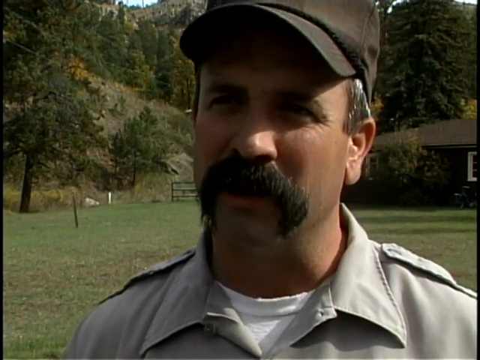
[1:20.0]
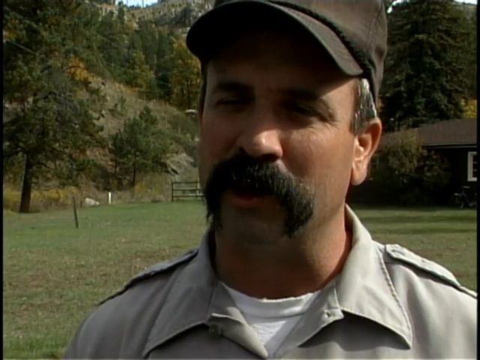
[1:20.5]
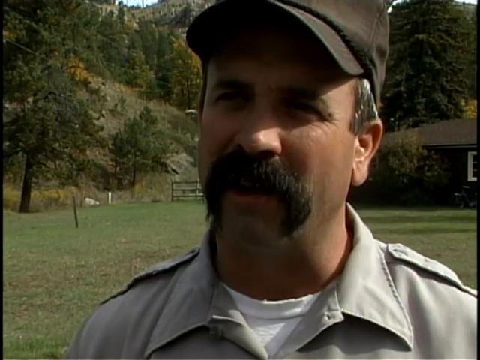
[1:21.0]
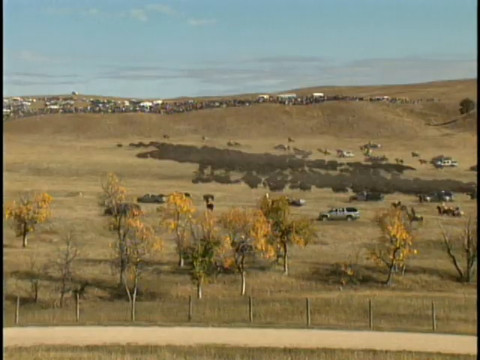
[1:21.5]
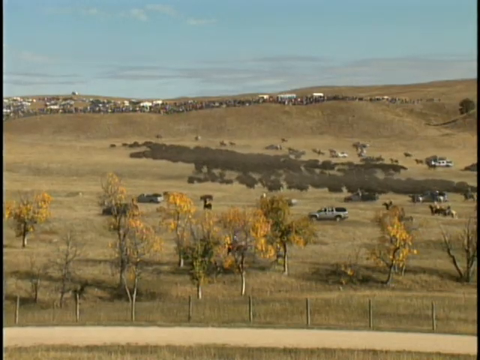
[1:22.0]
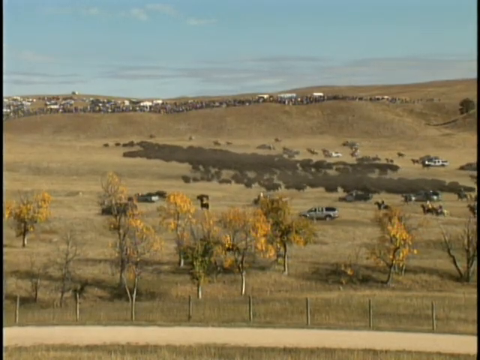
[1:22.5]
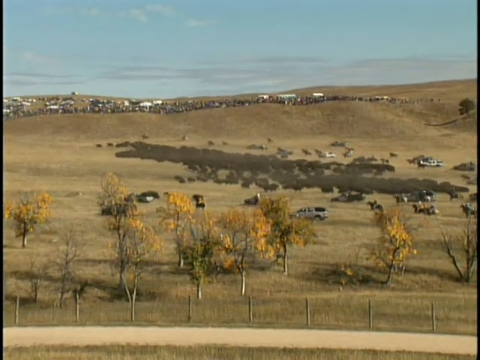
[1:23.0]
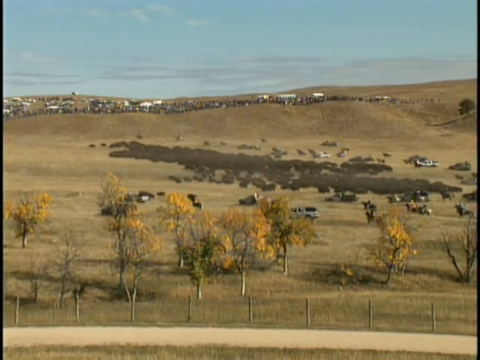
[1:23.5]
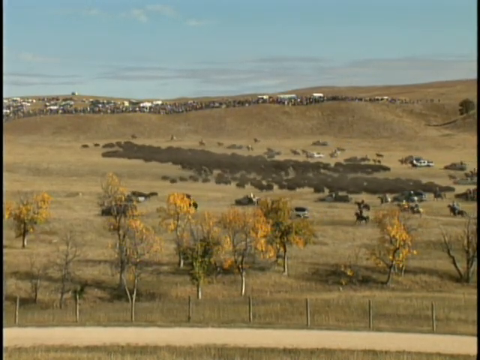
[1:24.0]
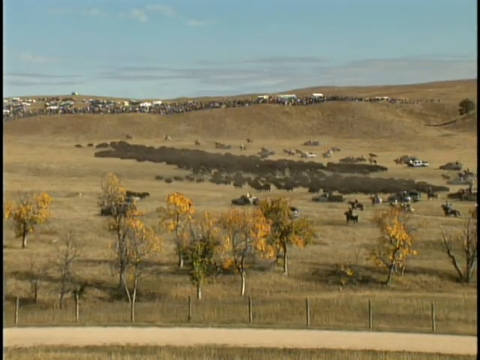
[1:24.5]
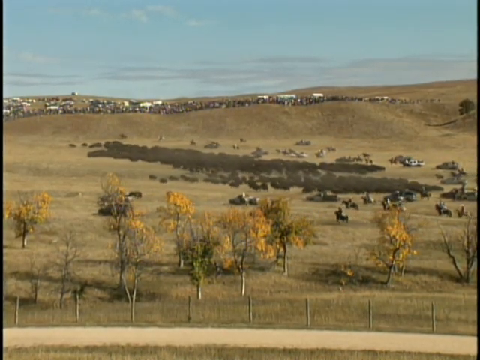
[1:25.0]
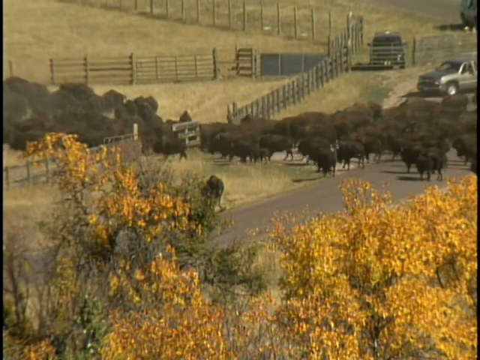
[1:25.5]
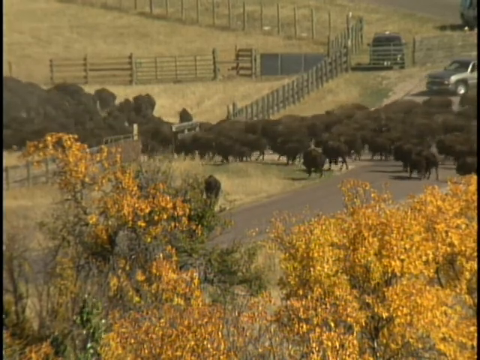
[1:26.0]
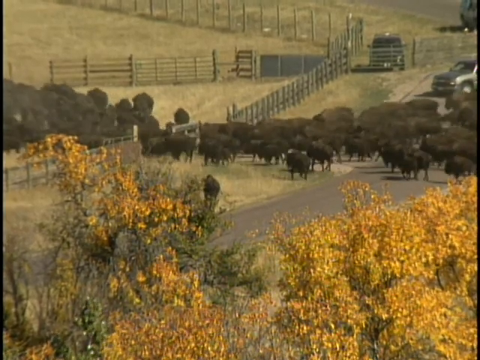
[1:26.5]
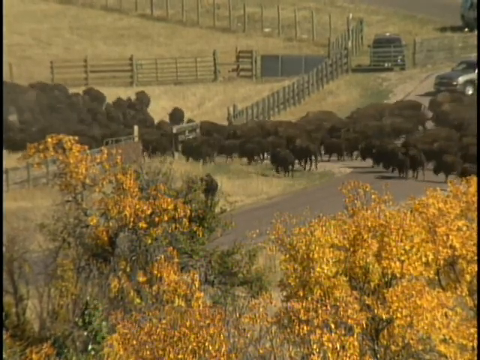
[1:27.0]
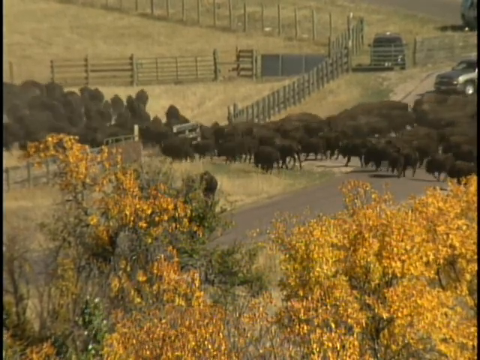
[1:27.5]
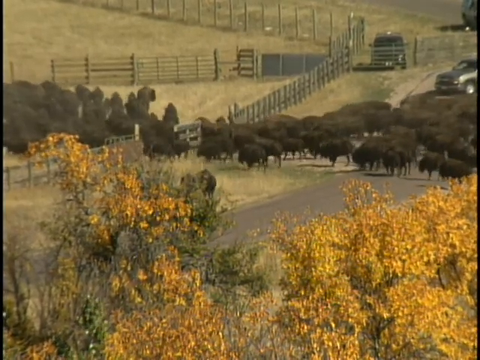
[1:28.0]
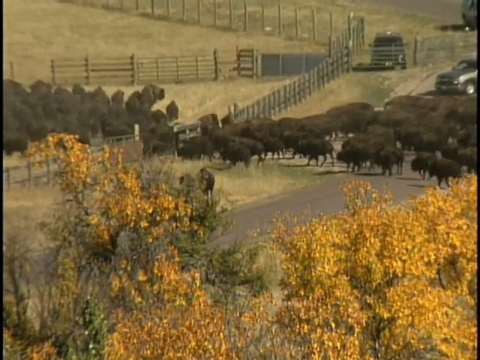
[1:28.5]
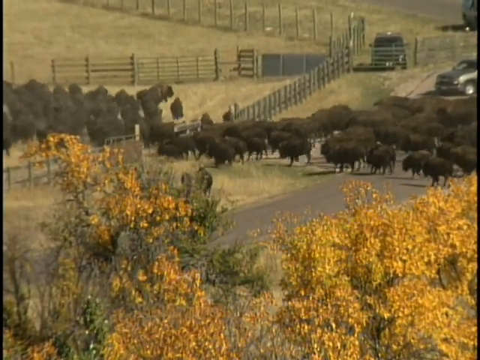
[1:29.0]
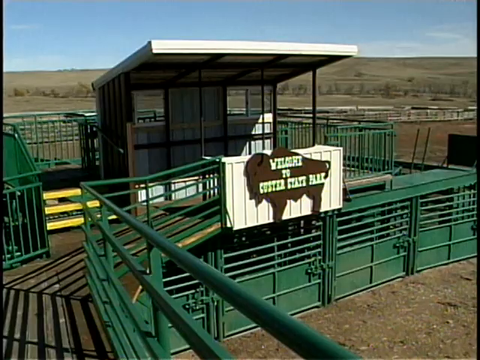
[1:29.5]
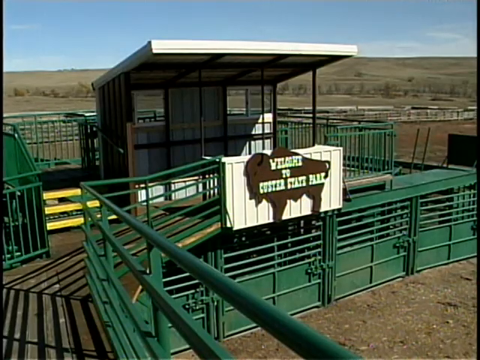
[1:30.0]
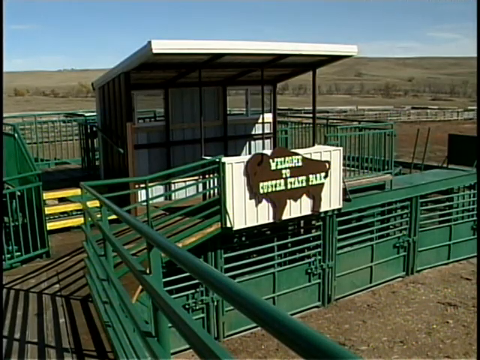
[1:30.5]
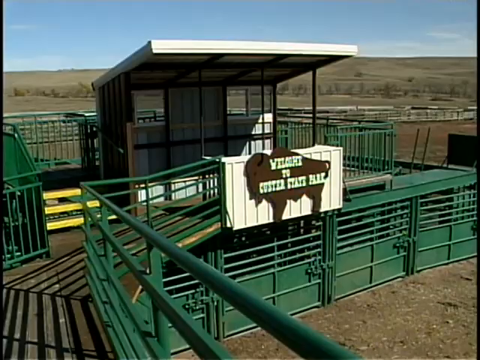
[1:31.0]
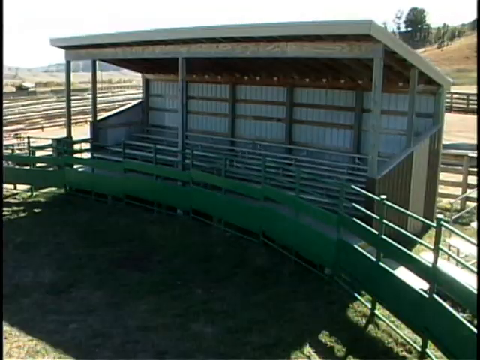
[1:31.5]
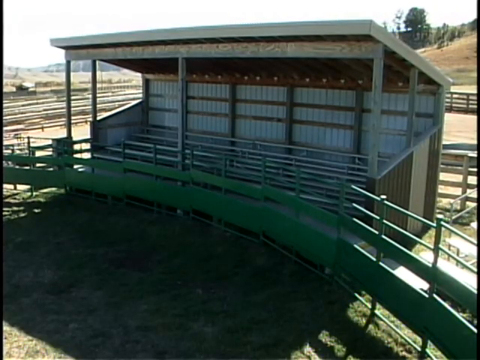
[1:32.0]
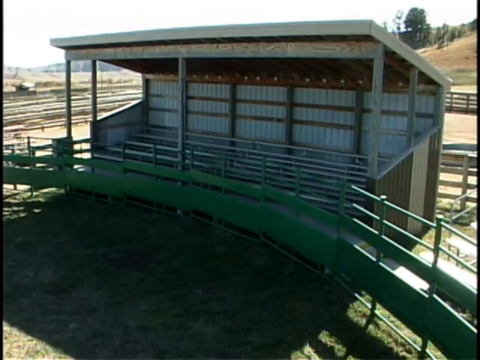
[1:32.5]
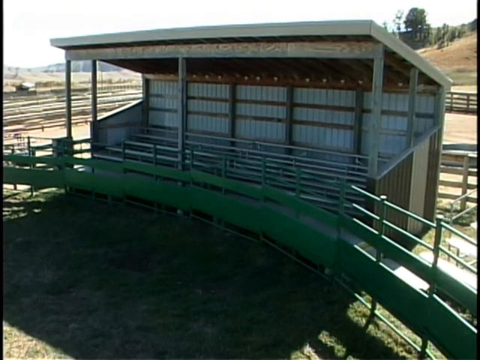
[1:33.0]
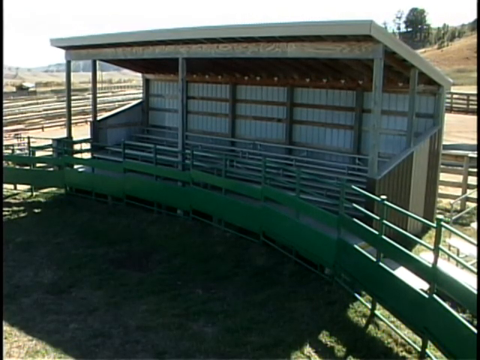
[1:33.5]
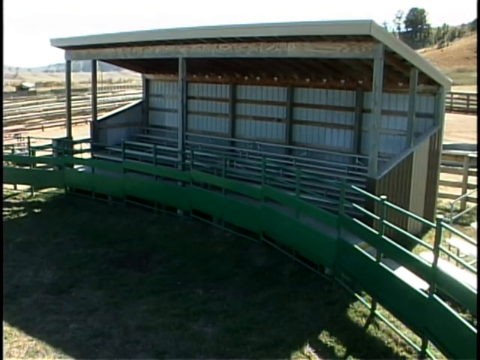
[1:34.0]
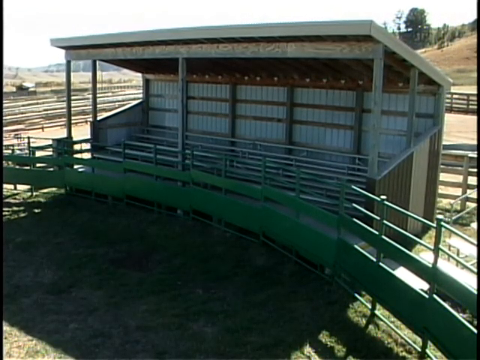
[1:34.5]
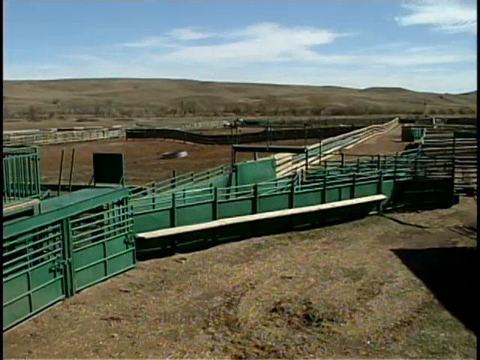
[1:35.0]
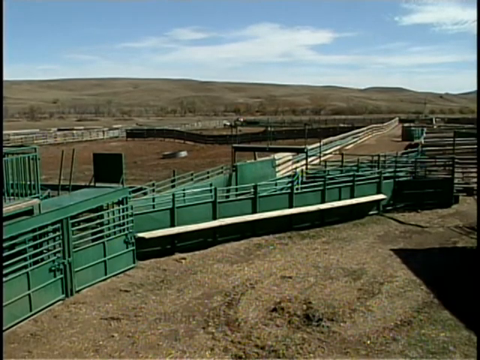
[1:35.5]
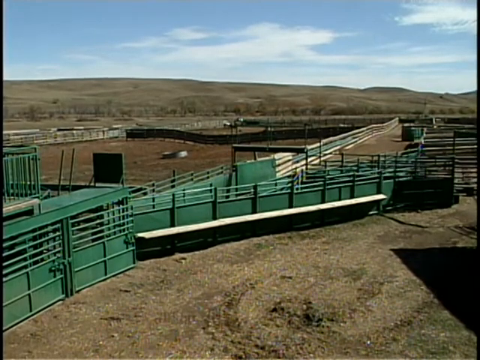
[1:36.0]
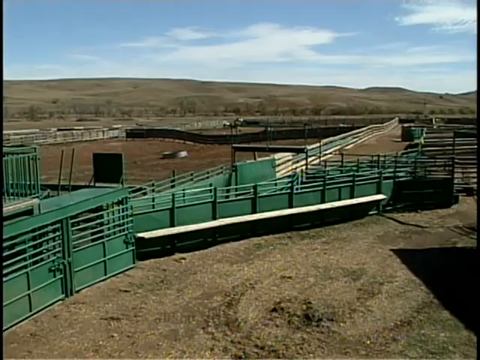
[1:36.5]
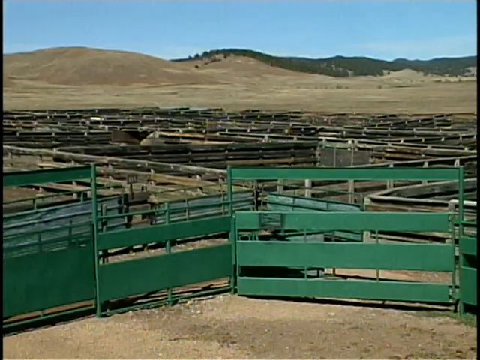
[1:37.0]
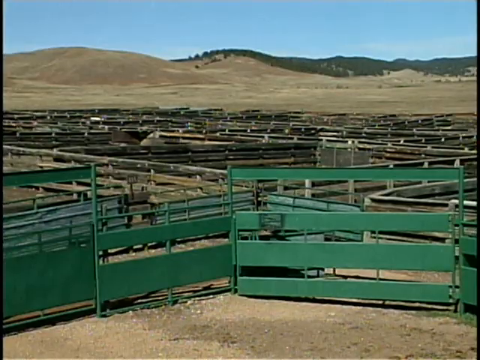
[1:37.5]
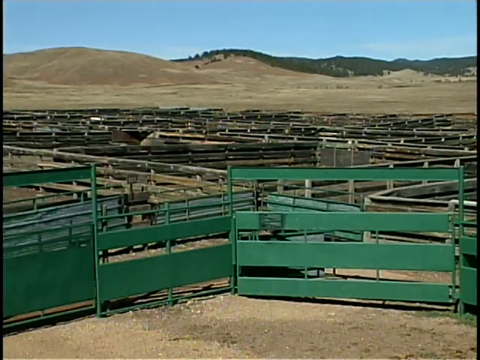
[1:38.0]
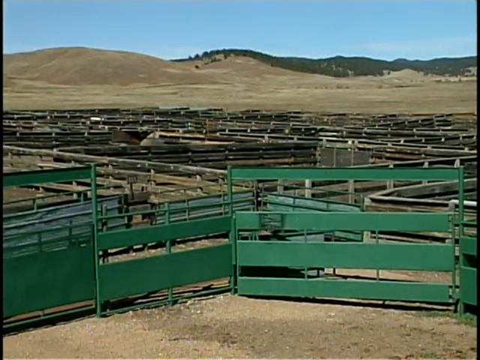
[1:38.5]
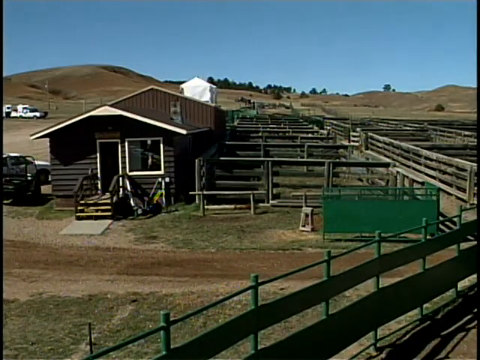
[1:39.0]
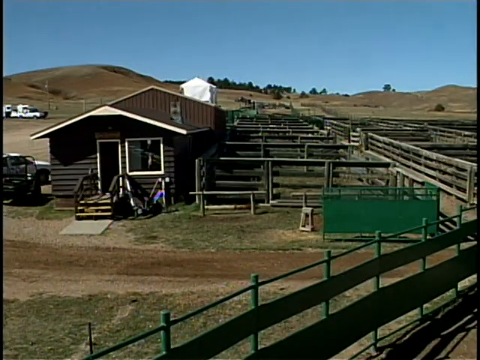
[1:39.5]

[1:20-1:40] The camera focuses on a man with a black moustache, showing his mouth moving as he speaks. He looks like a ranger and is in a uniform. There is a caption on screen. A picture shows a big group of animals entering through the gate of a structure; the gate is green, and there are things made of timber extending to the other end. The camera again focuses on the group of animals entering through the gate. There is a fence, a green structure and a white structure made of steel, and there is a caption on the green structure.